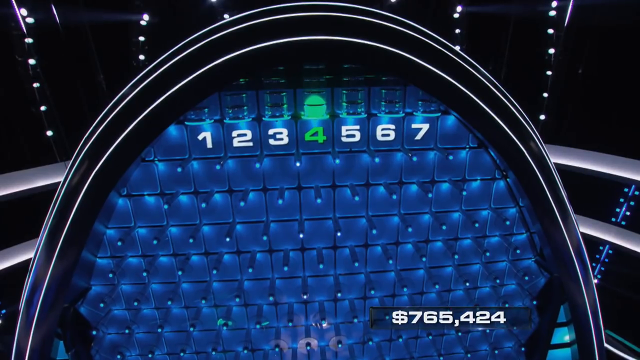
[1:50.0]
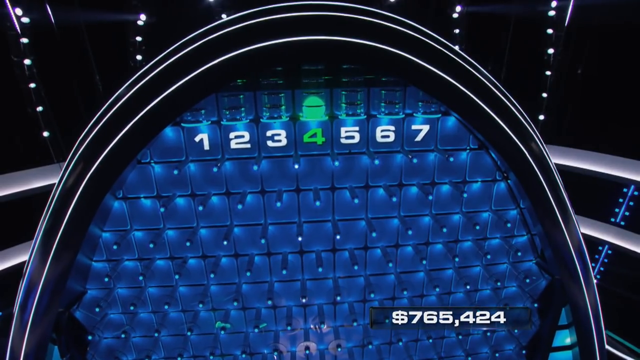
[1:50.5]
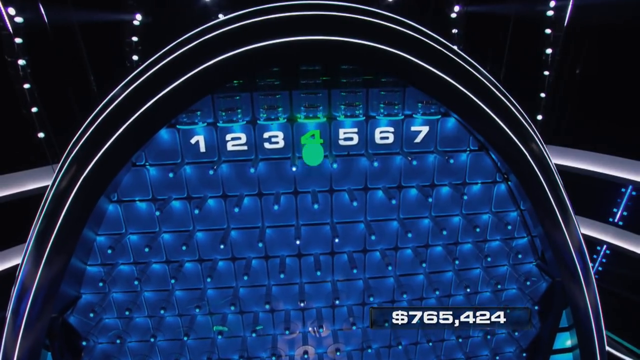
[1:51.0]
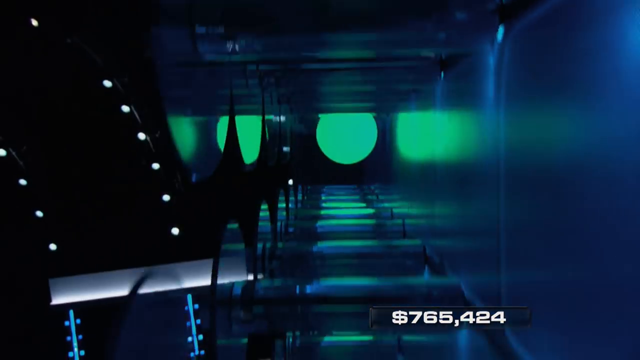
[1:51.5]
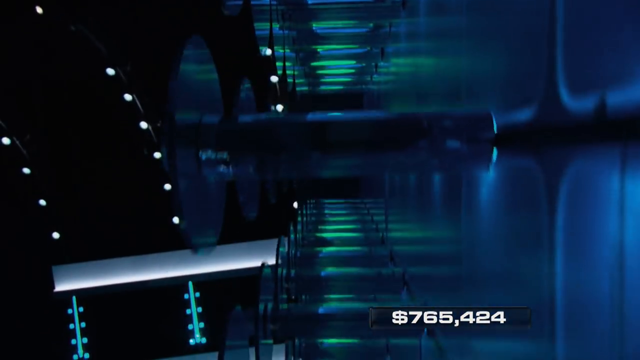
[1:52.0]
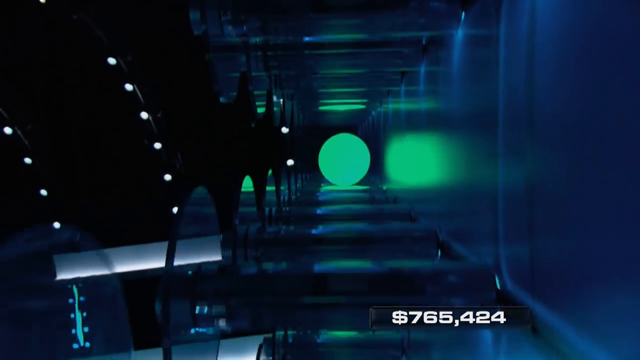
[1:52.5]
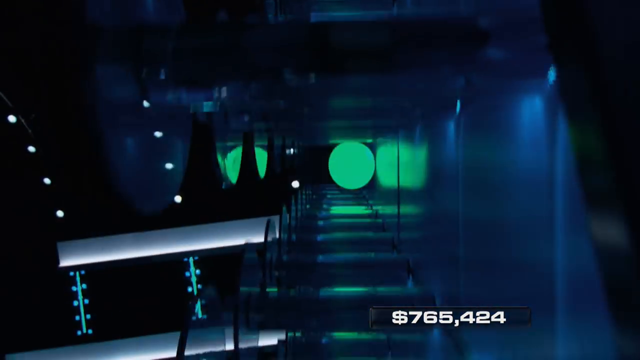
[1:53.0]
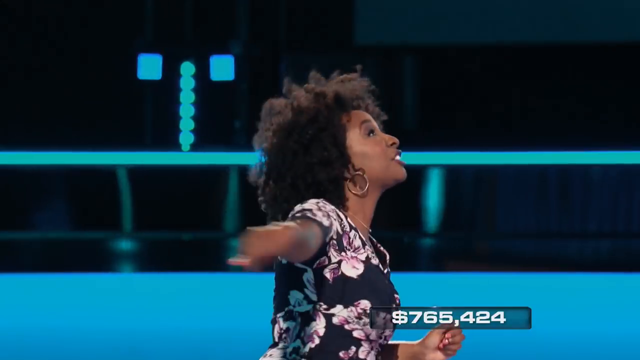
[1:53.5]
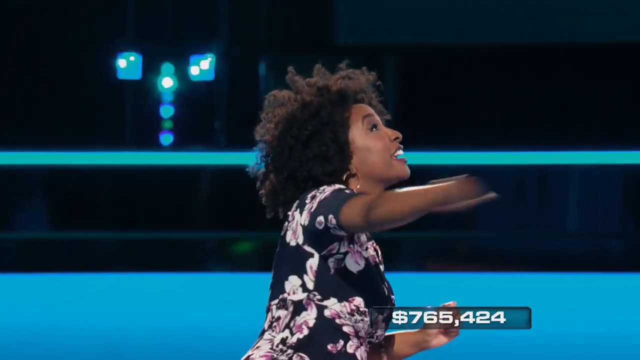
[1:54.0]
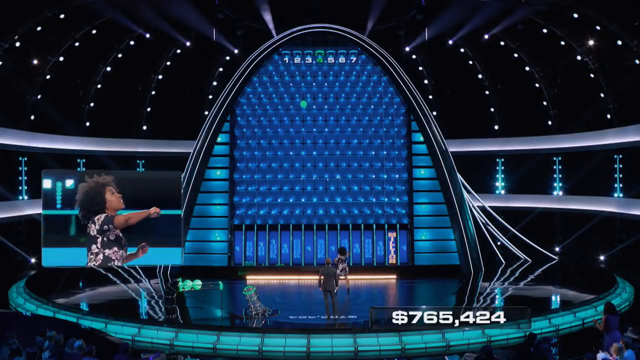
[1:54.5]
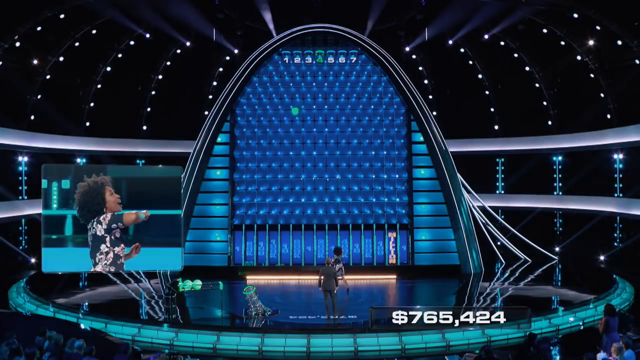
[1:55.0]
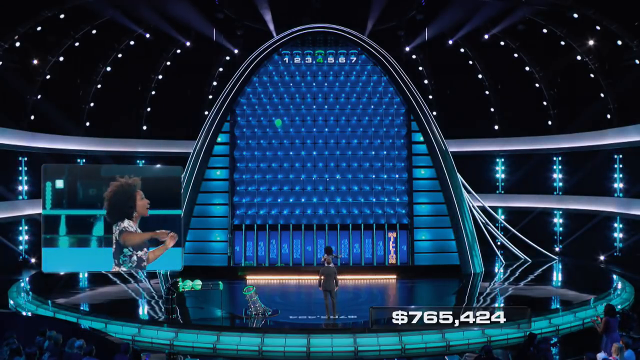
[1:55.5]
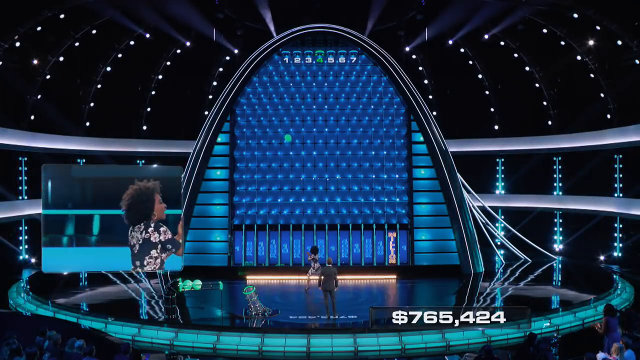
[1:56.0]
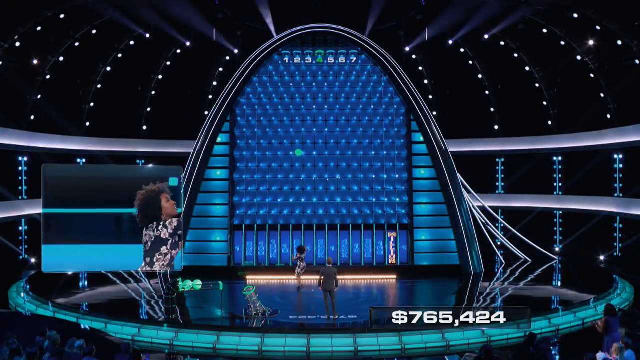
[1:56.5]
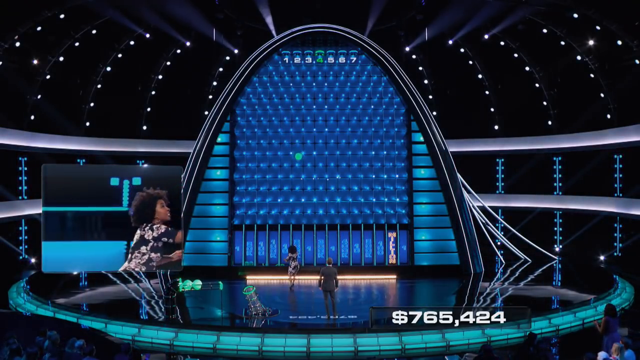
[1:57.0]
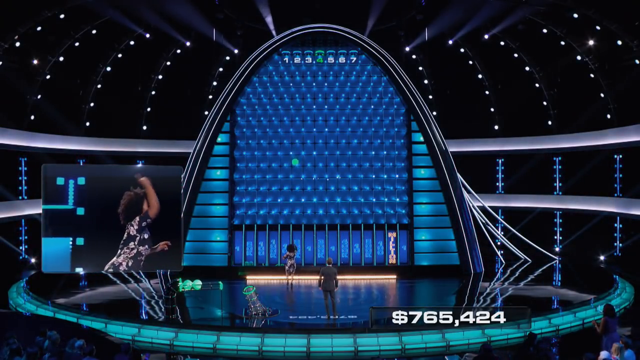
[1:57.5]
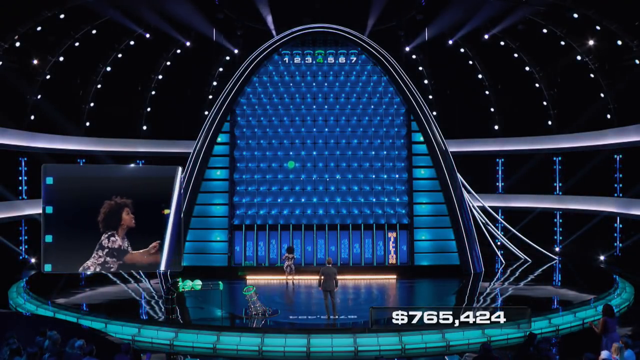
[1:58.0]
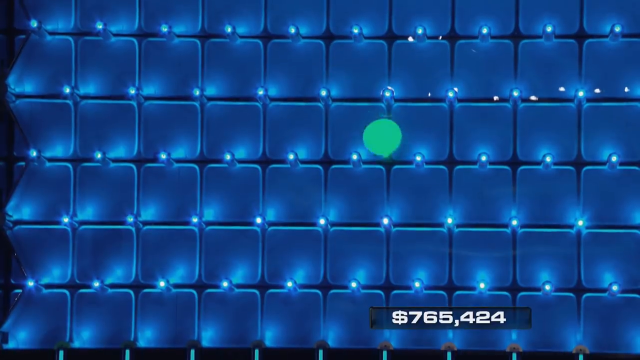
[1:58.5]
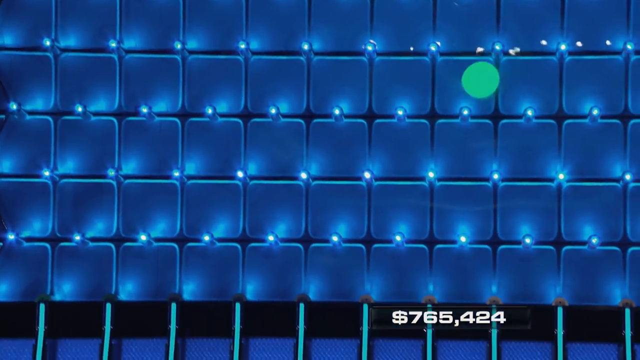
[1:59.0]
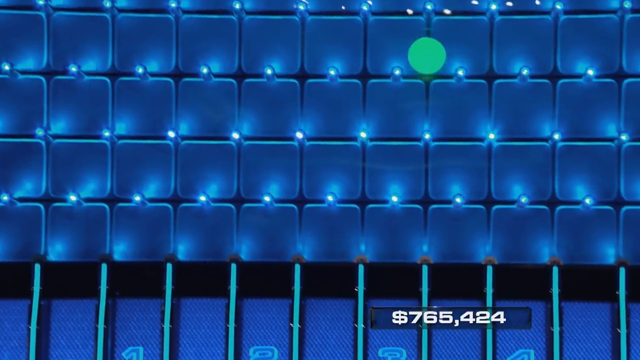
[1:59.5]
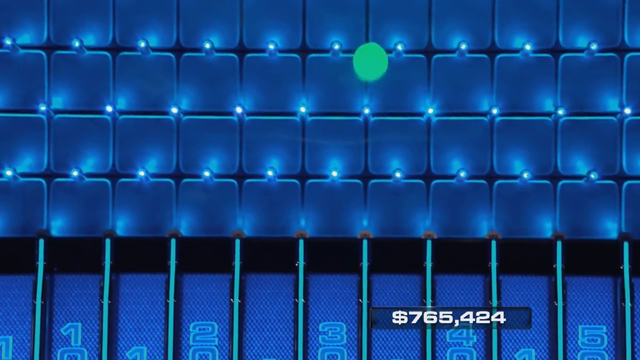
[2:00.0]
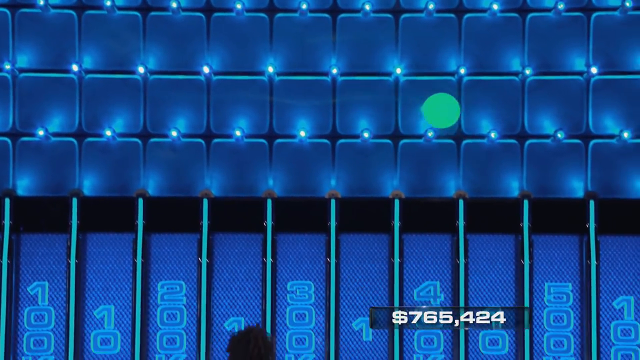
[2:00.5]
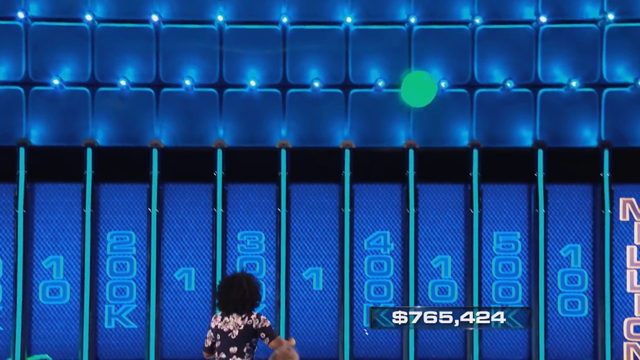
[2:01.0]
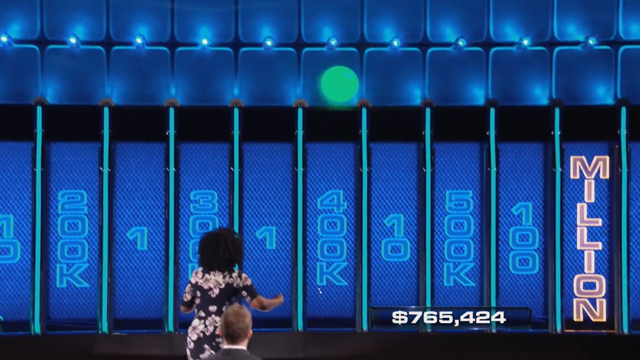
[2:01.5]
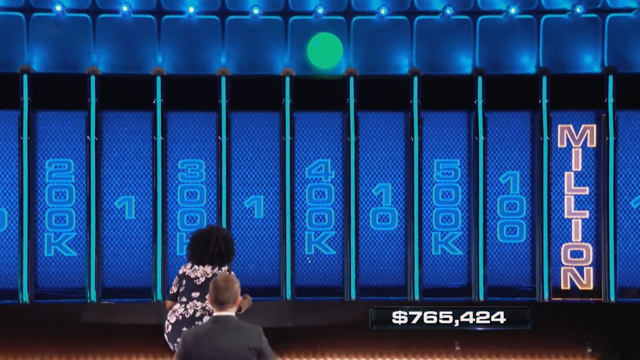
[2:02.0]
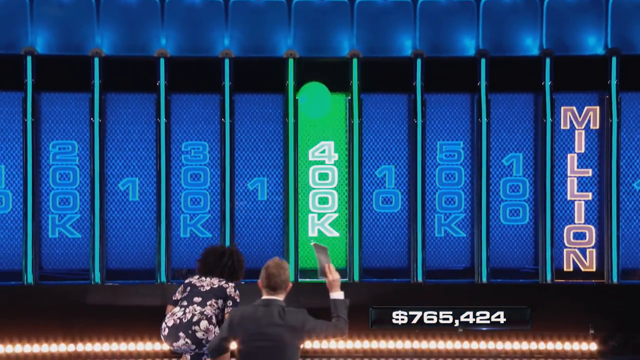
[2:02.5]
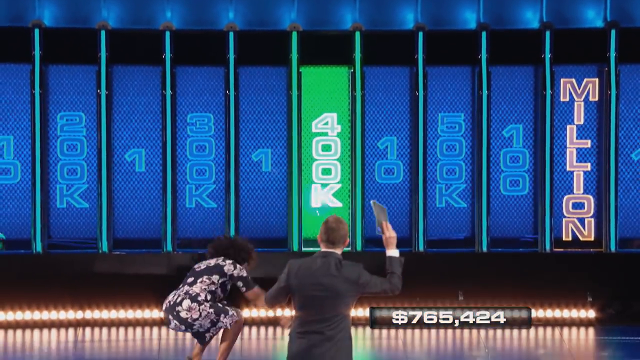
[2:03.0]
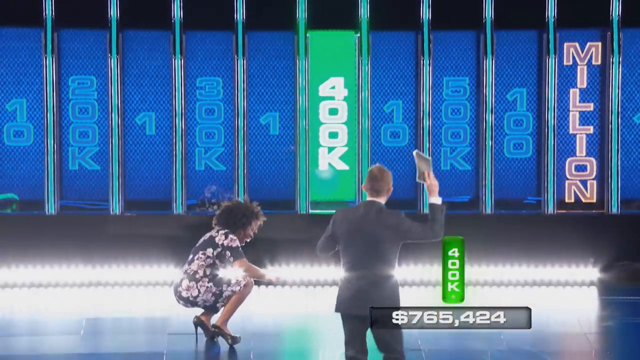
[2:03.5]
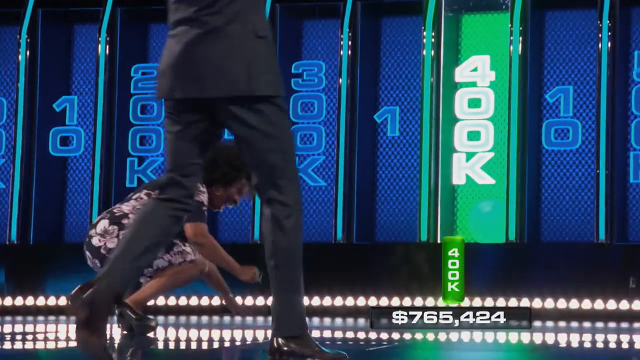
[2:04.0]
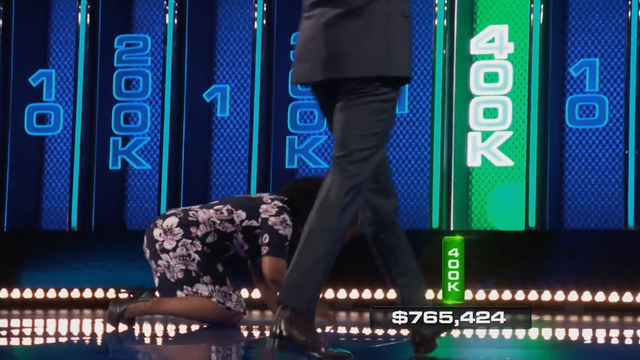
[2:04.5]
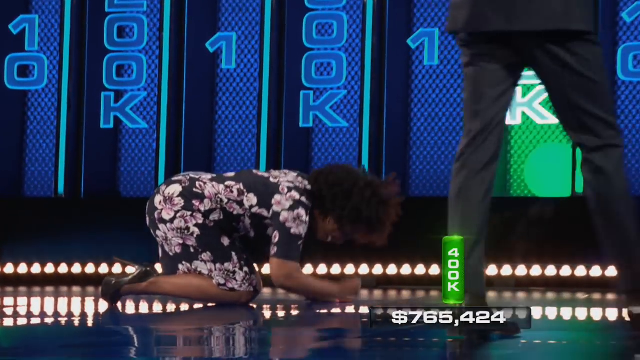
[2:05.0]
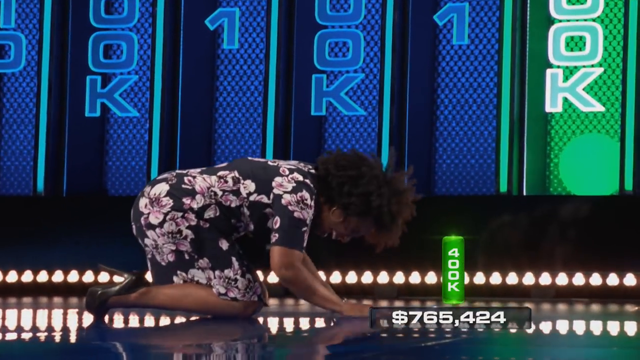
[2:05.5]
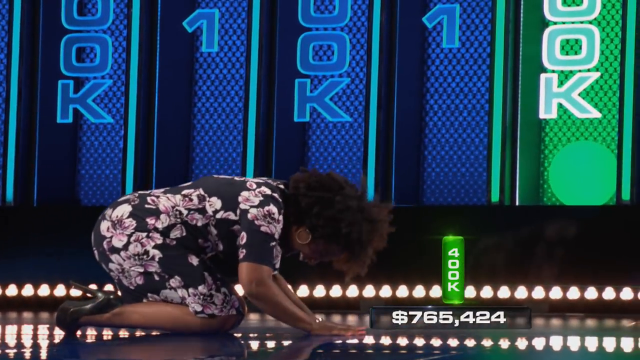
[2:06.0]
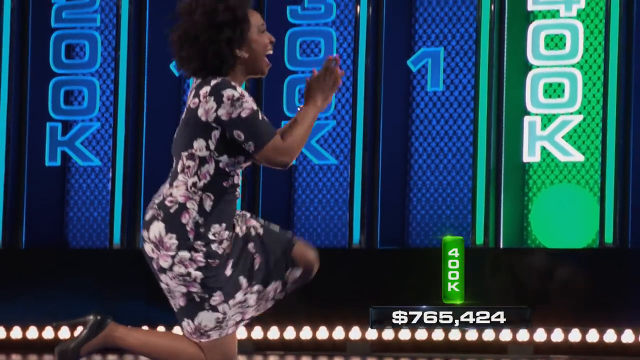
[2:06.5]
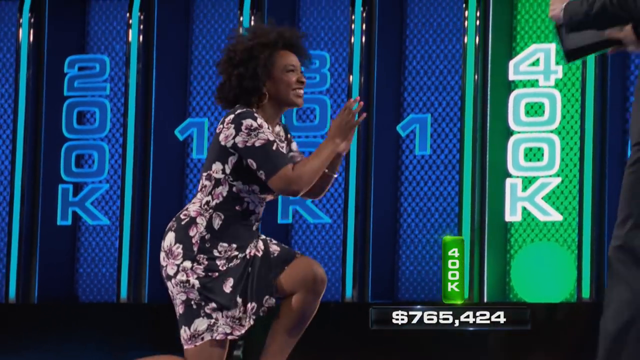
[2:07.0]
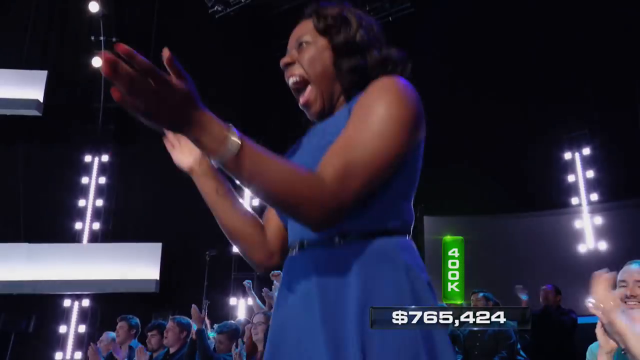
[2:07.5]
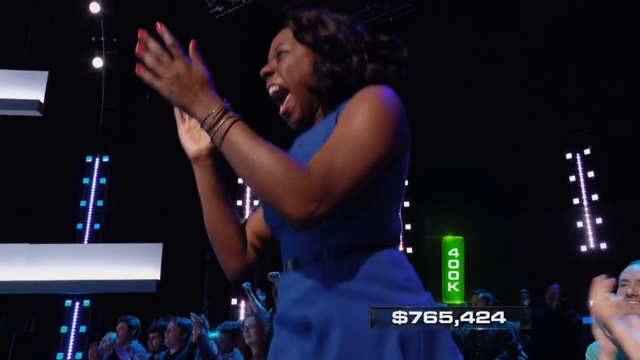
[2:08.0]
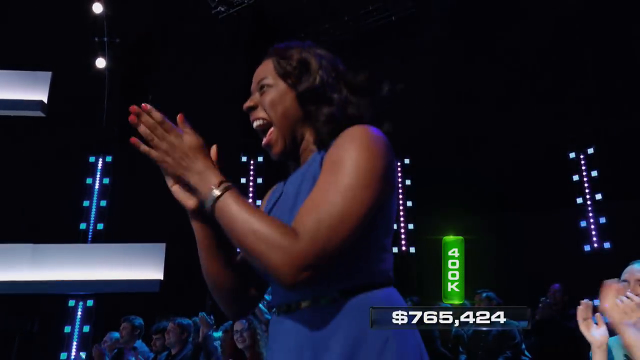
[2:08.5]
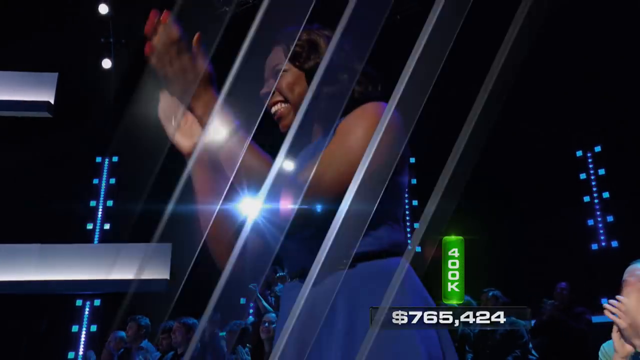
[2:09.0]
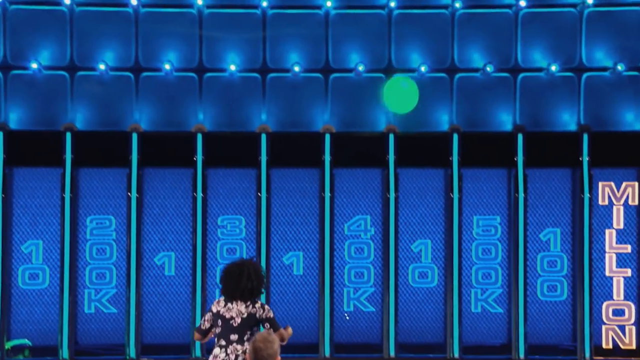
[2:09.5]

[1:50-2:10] The giant blue screen in front of them shows the numbers 1 to 7 with the 4 lit up green. A green ball starts to come down and lands on 400K. The woman in the flower dress falls to the ground, hits the ground with her hands in excitement and smiles, then gets up and claps. A woman in a blue dress in the audience claps again and looks very excited that the woman in the flower dress appears to have won 400K. A replay shows the green ball falling unpredictably toward the different dollar amount choices, which include 1, million, 100, 10, 500K and 200K. The green ball lands on the 400K spot, which also lights up green.